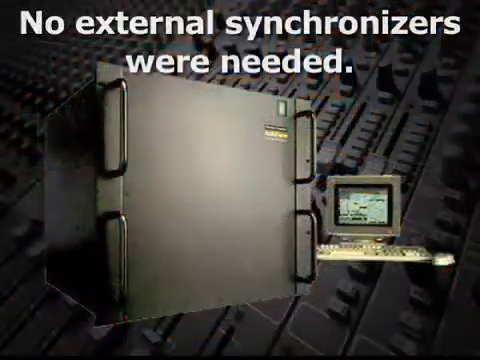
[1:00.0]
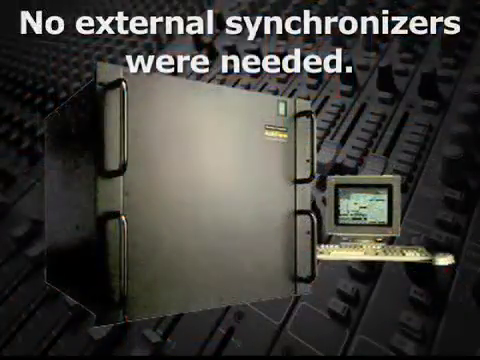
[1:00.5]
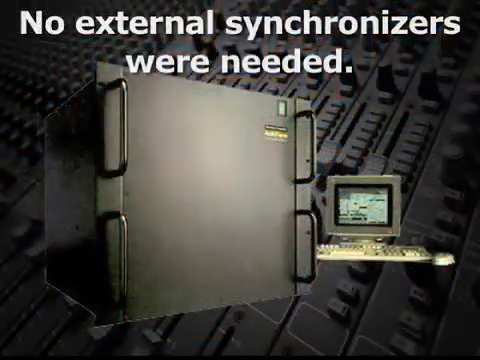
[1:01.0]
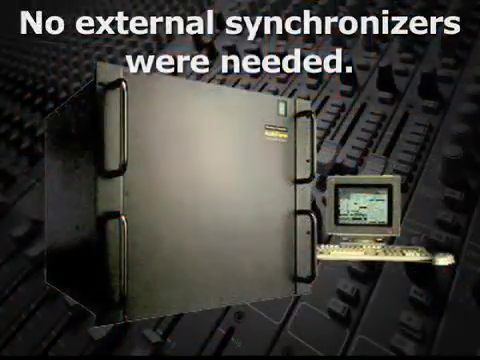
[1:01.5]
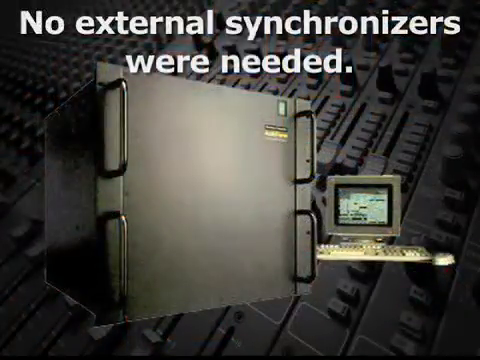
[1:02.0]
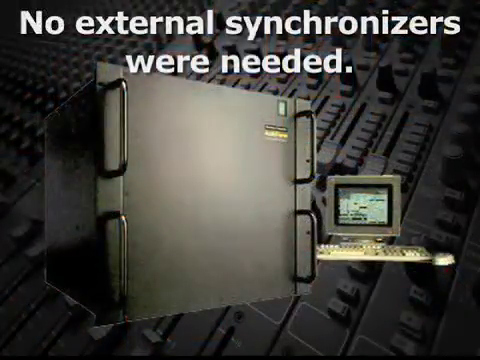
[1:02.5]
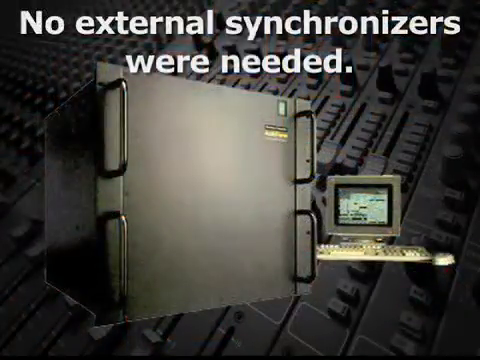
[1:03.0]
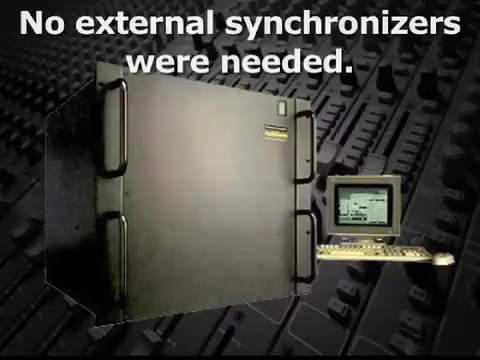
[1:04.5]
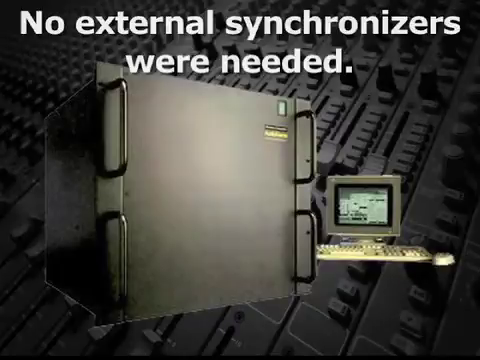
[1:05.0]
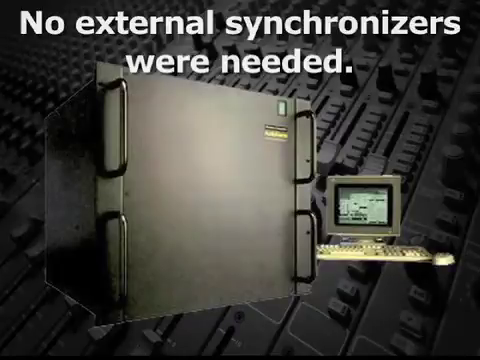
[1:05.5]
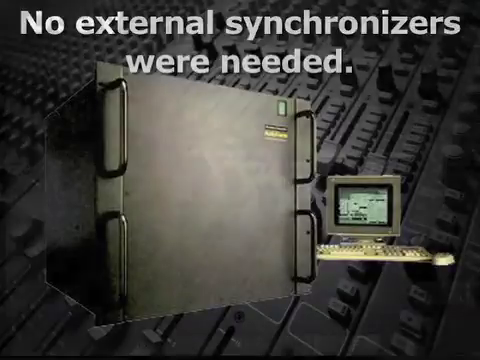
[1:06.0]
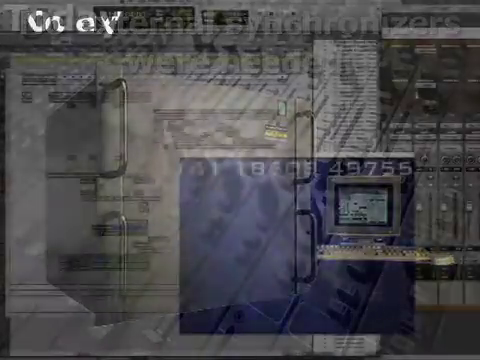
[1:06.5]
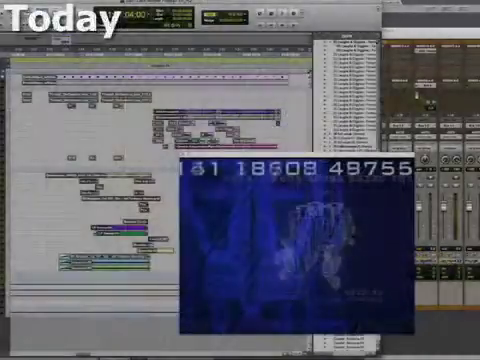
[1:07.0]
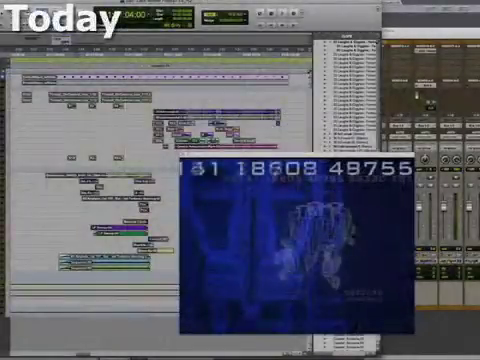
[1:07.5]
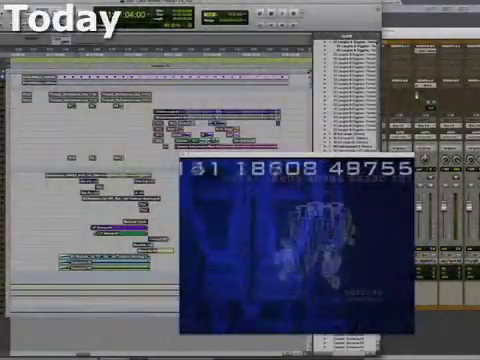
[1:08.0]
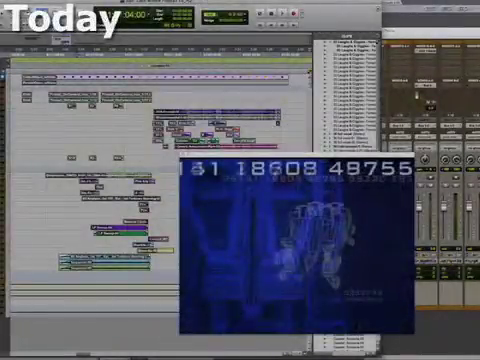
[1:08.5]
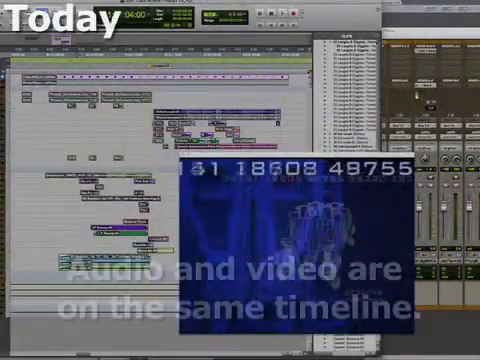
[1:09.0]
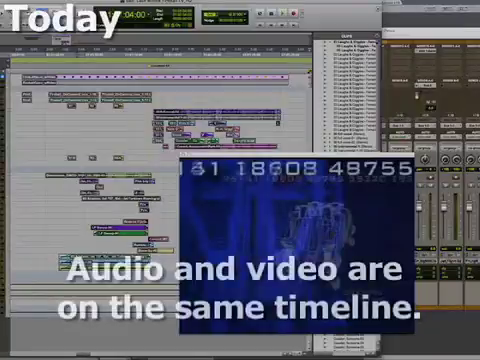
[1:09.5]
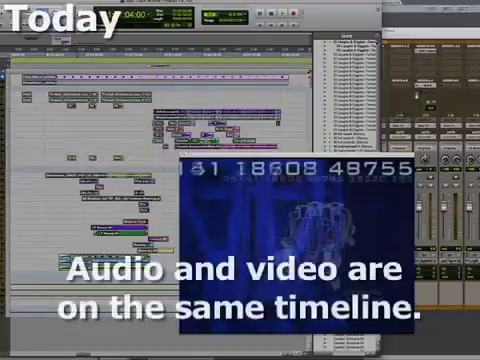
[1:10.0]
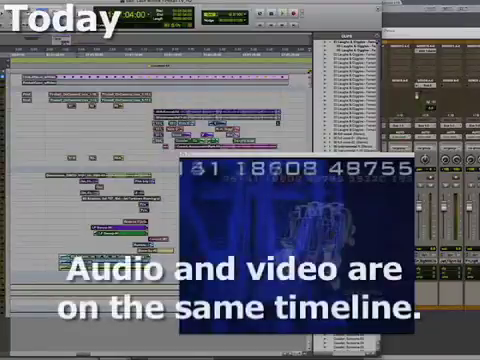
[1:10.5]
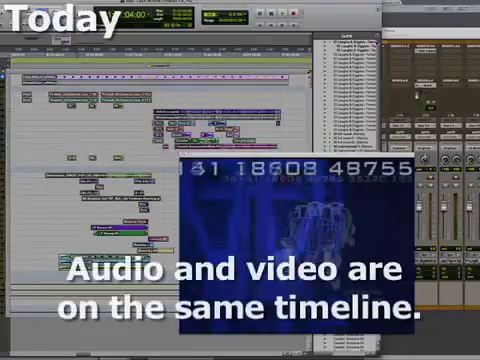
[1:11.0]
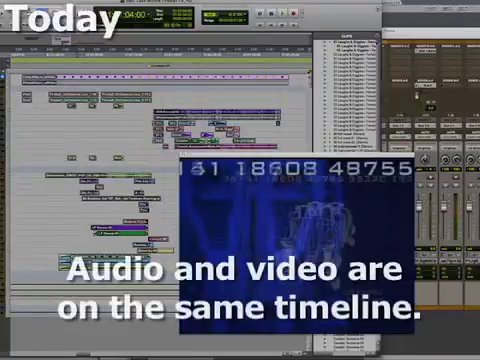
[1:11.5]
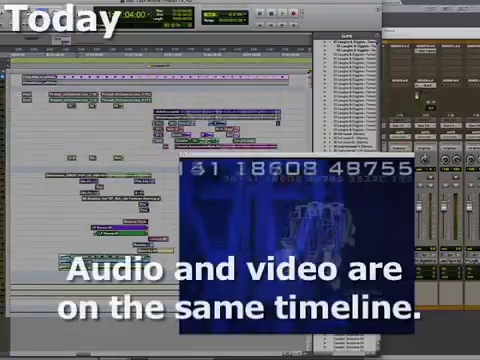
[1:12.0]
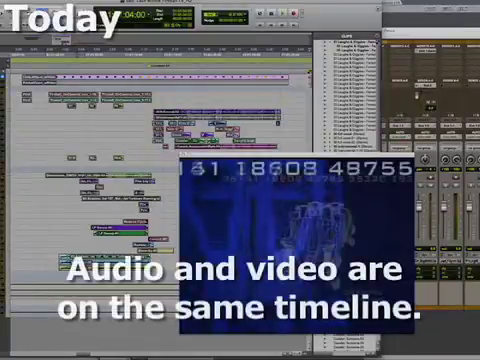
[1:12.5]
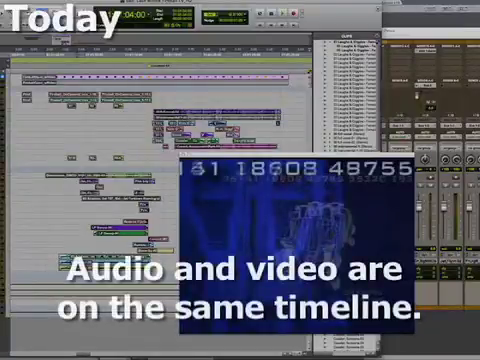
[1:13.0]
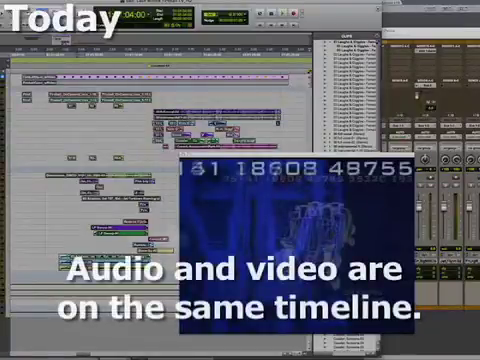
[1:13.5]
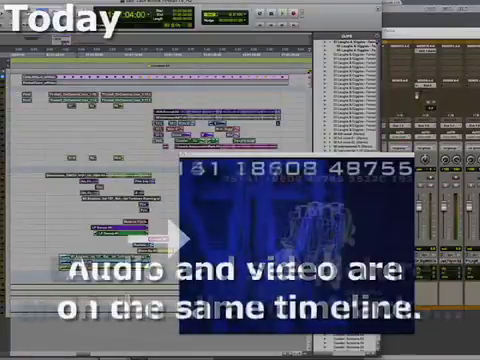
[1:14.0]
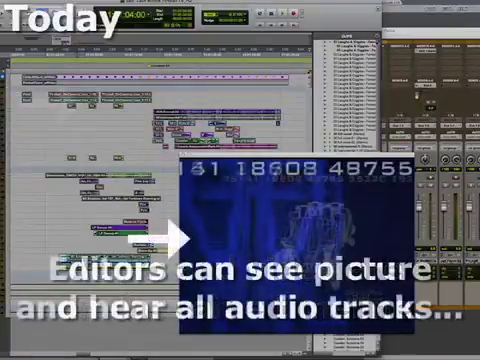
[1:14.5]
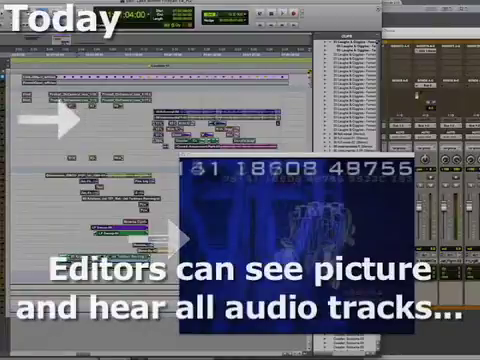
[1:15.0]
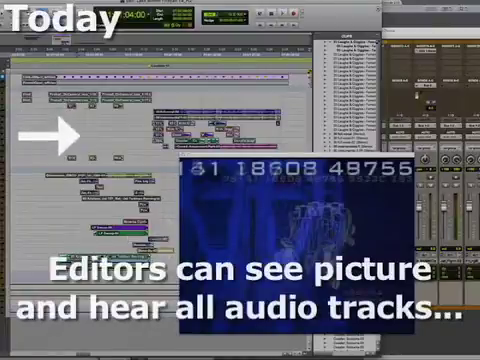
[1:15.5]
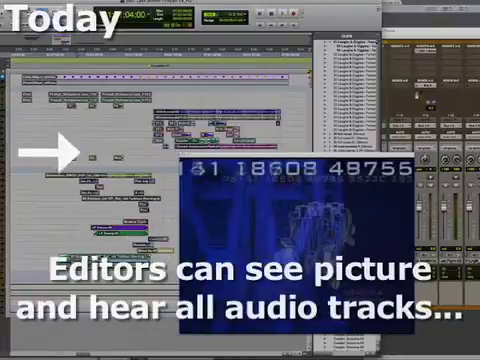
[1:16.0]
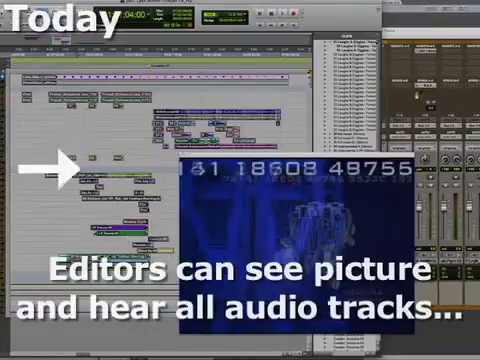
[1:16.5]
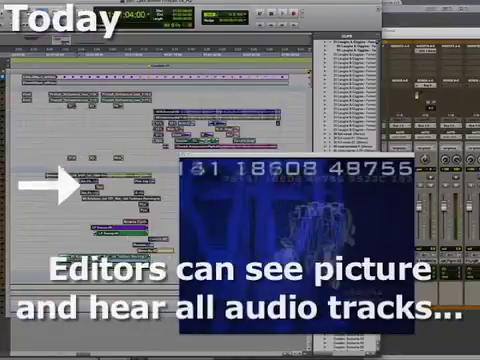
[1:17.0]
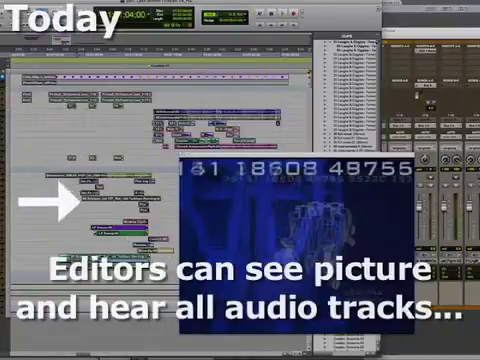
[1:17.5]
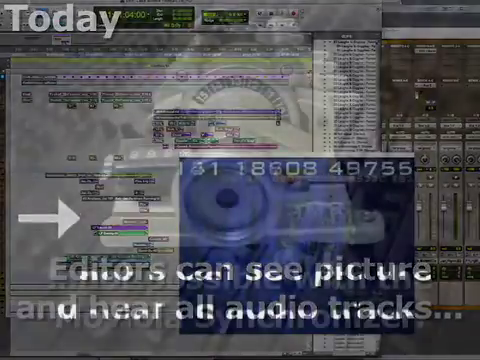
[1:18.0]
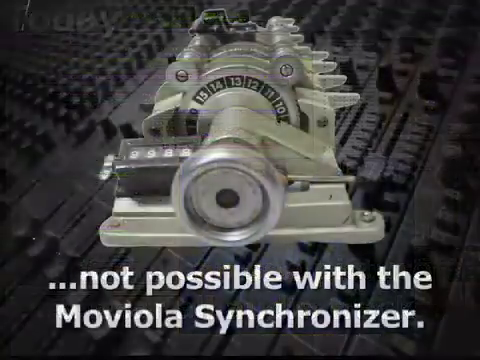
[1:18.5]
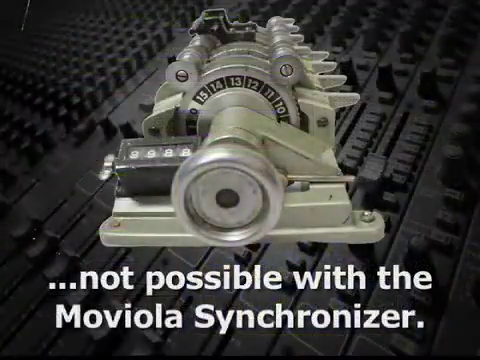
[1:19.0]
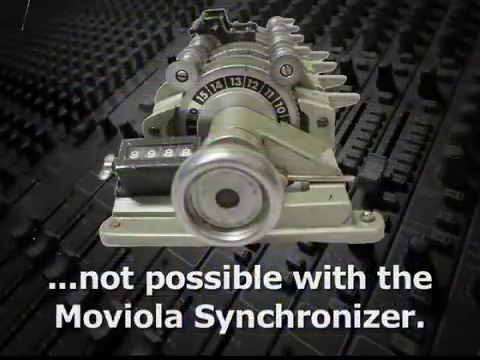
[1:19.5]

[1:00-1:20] Text on screen reads "no external synchronizers were needed", and there is what looks like a black box with a computer in the background. The view flicks over to what looks like a digital display with "today" in the top corner and "audio and video on the same timeline" at the bottom. It shows what looks like a Gantt chart style progress, with the sliders and knobs now another window in the interface rather than a separate piece of machinery. Another piece of text follows, beginning "editors can see the pictures". The view then flicks back to the original Moviola.